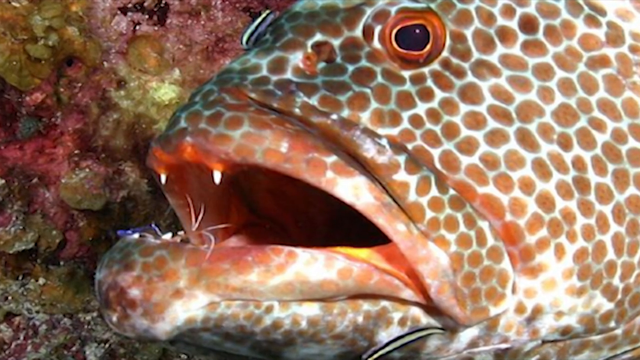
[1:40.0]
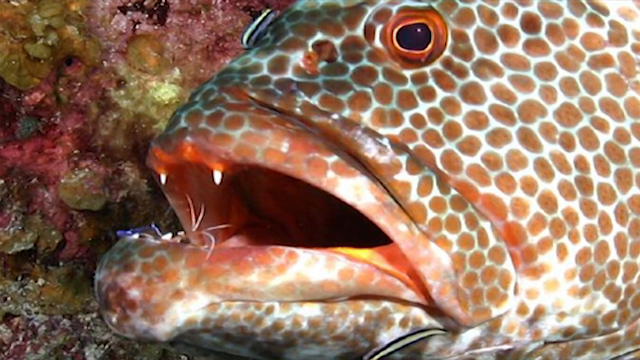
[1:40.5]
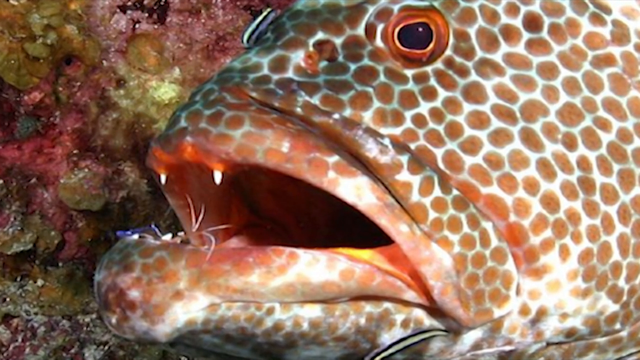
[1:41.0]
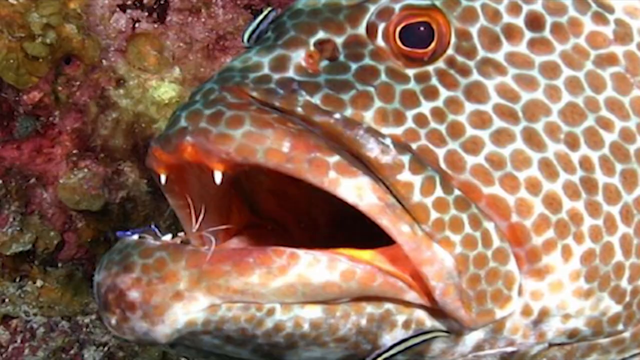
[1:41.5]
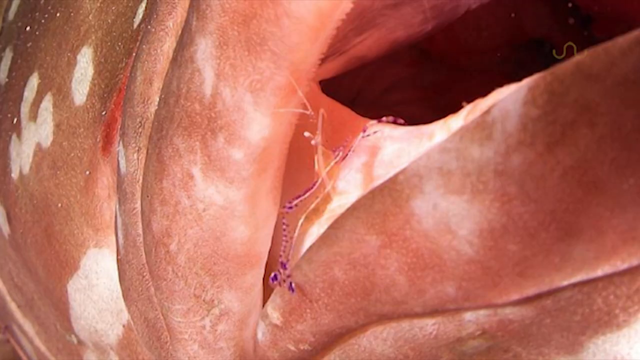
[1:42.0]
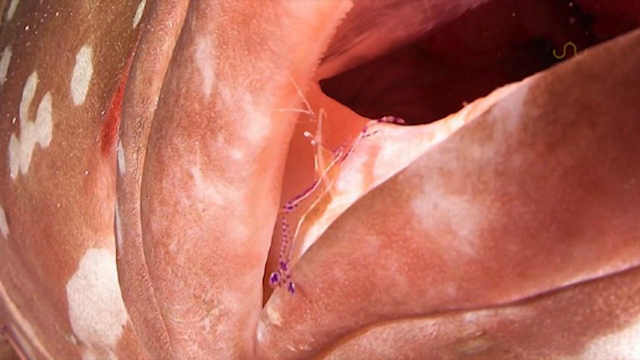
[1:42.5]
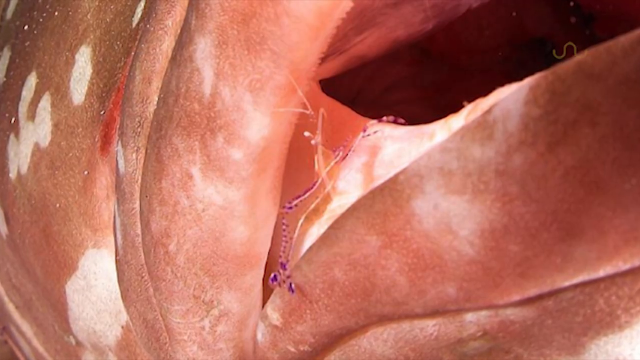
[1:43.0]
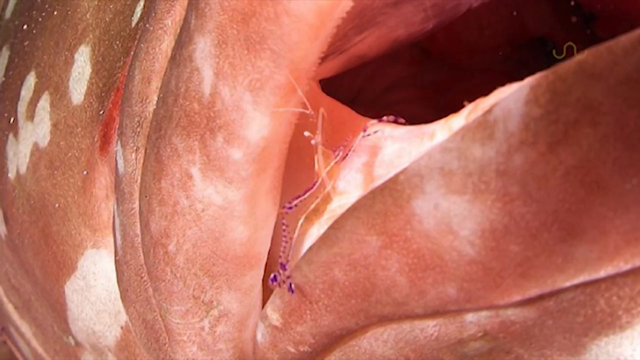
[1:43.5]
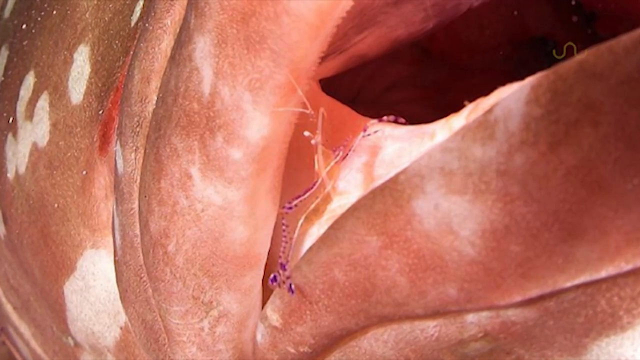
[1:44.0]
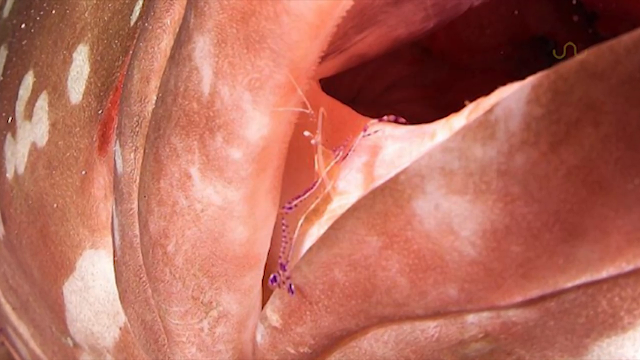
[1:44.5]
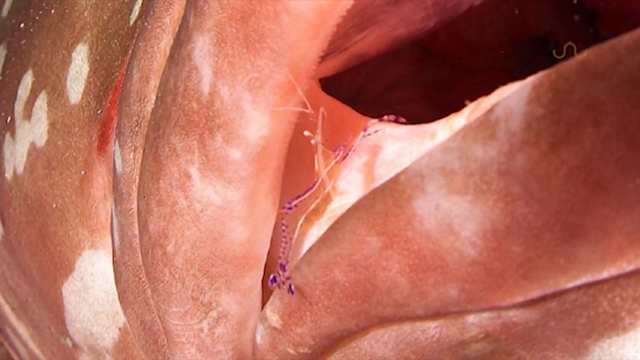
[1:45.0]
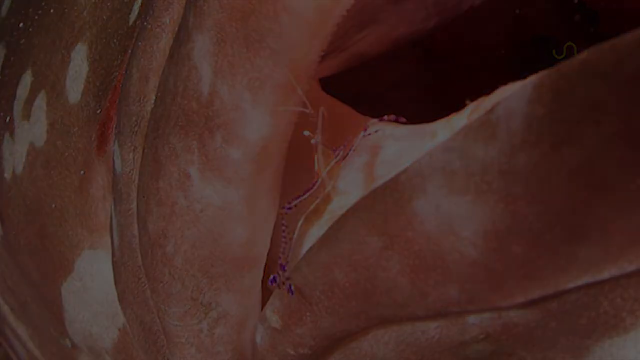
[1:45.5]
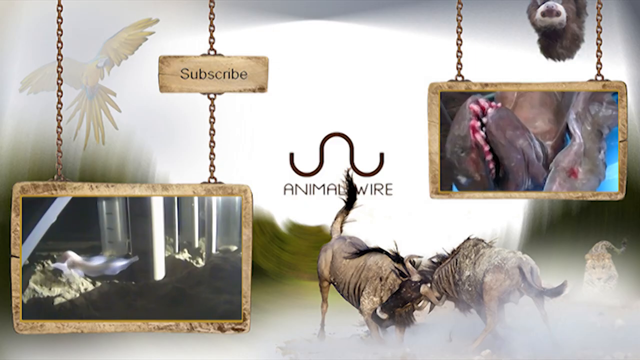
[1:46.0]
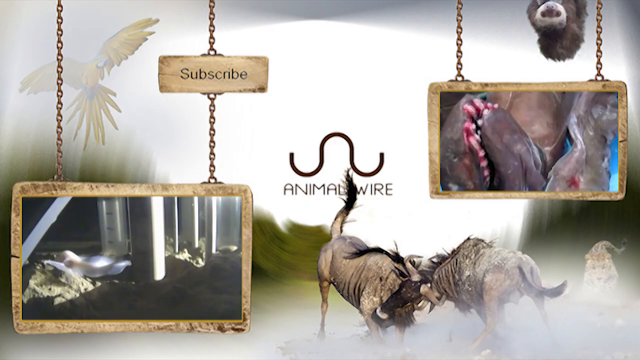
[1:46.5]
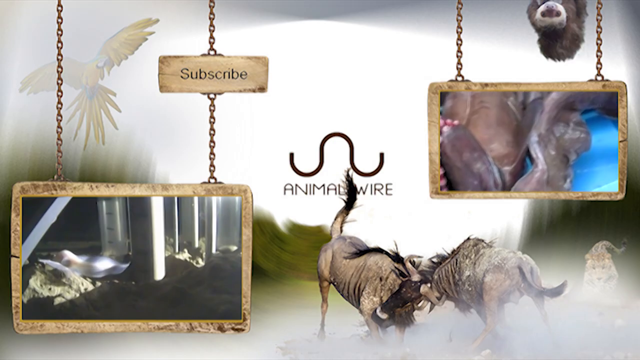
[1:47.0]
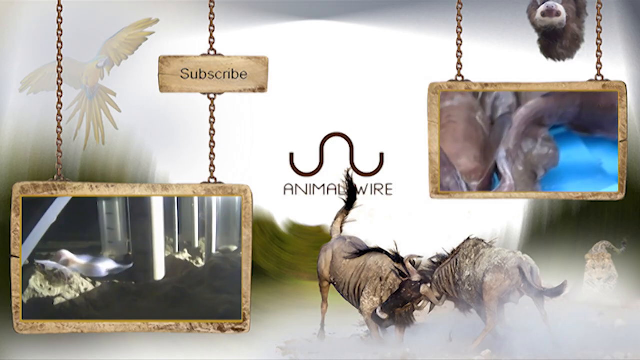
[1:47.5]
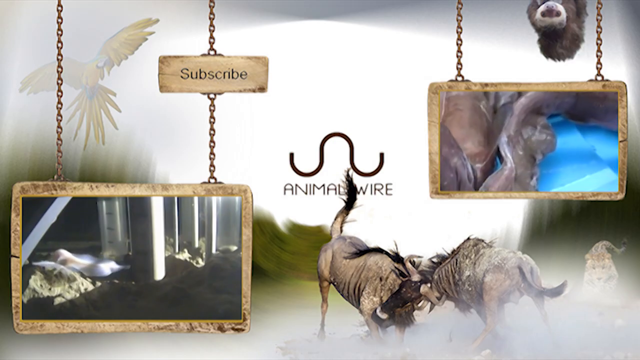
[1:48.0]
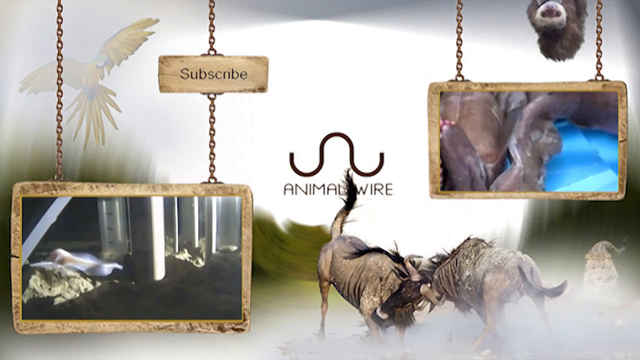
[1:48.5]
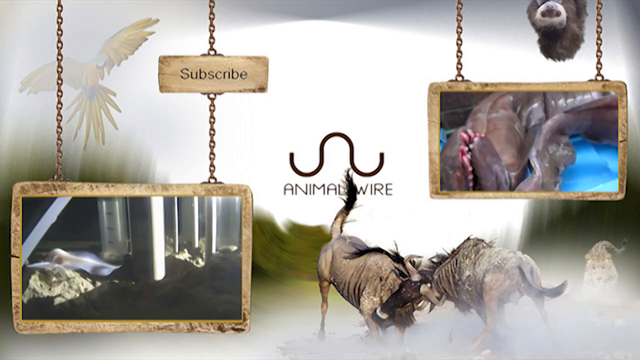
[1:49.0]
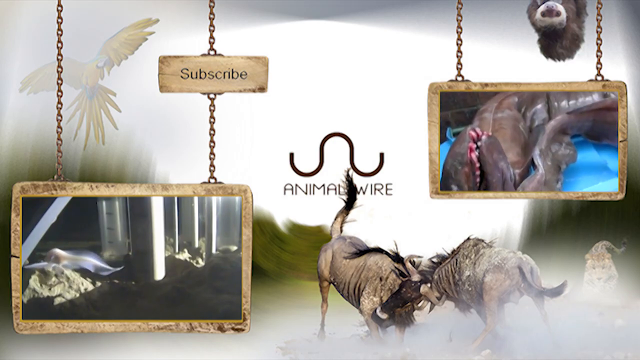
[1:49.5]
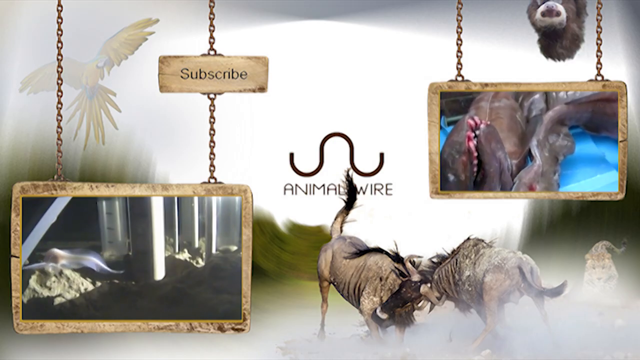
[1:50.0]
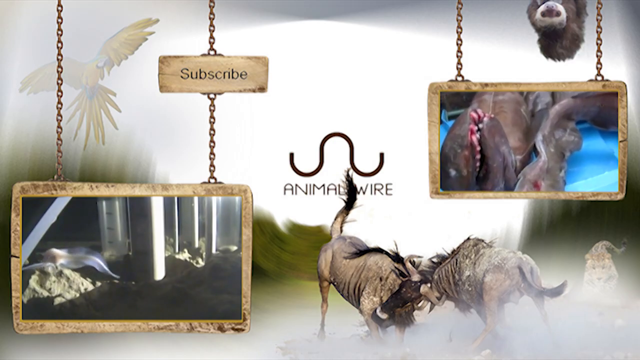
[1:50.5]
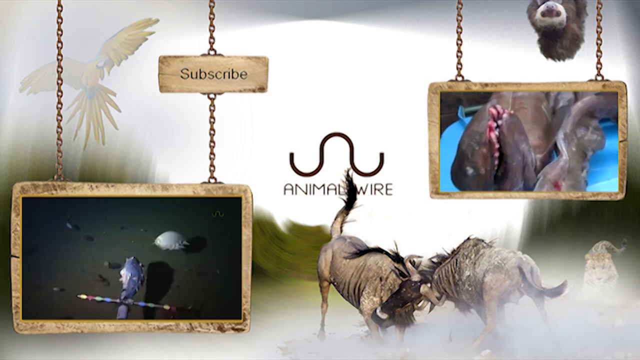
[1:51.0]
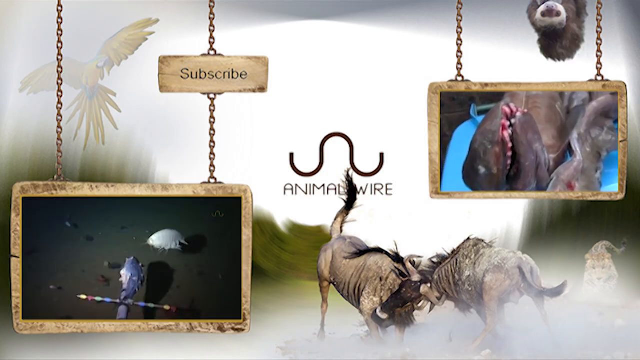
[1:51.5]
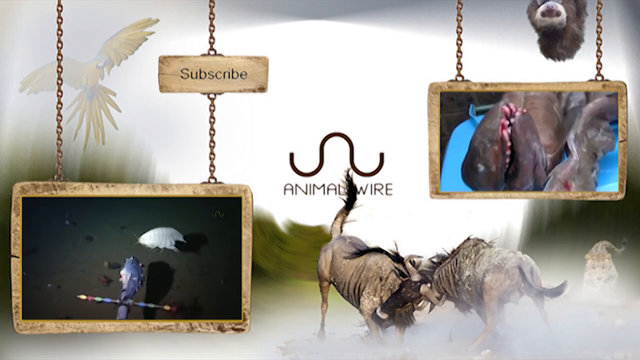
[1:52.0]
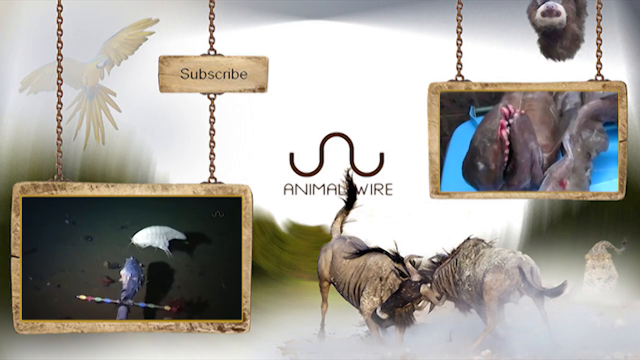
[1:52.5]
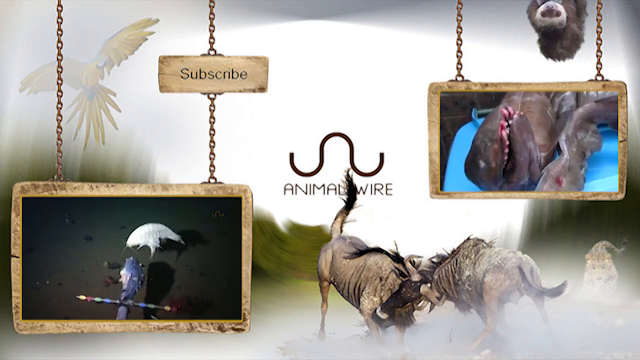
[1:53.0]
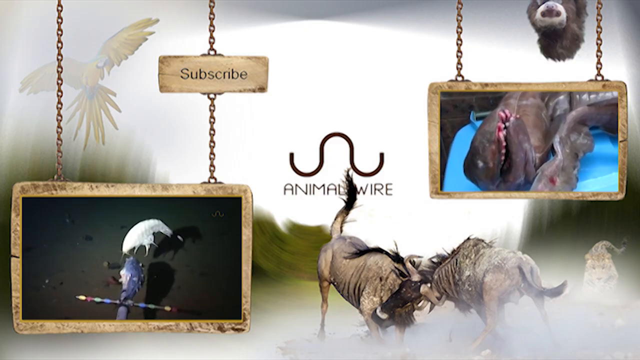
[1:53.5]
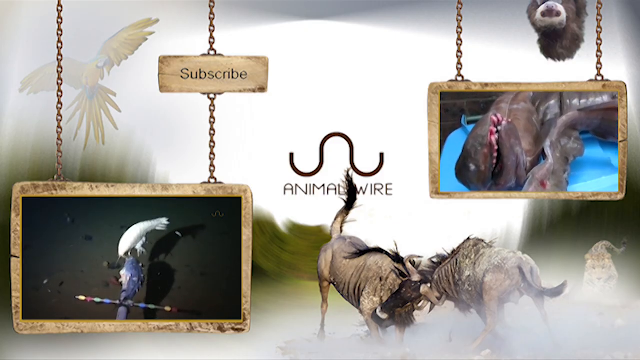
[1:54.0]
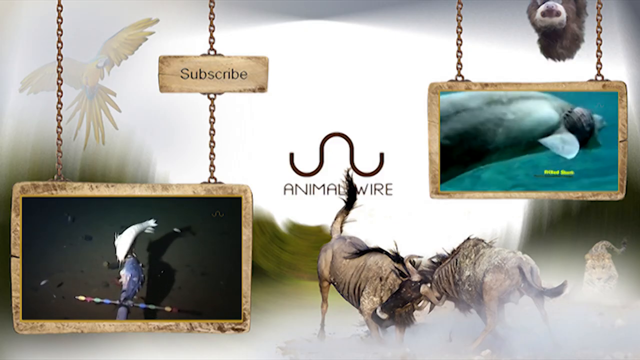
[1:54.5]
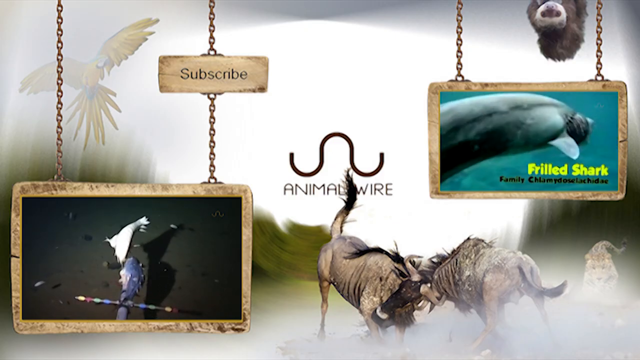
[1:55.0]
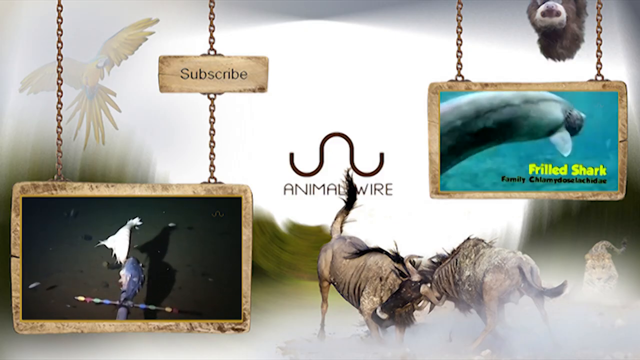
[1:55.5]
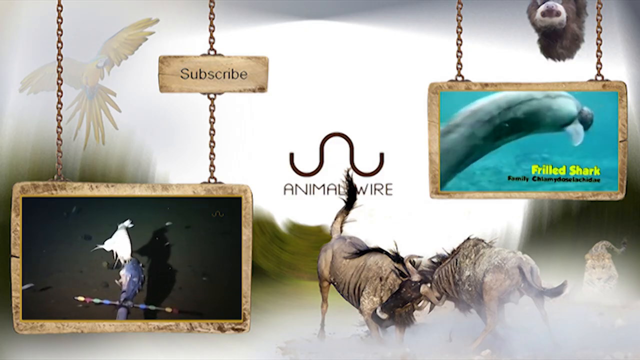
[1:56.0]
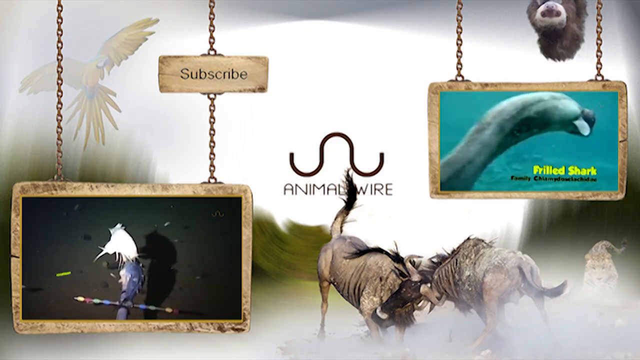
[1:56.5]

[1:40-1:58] The Pedersen's shrimp is inside the mouth of the big fish, which is really big and has lots of spots on it. A screen then says "subscribe animal wire". The view returns to the spotted fish in a close-up. The final screen shows animal wire and two boxes hanging on chains that show two videos of different underwater creatures: one might be a shark on a bright blue background, though it is hard to tell, and the other is an underwater scene with a fish moving close to some other fish. Various scenes of the creatures interacting with each other appear. An animal wire logo is shown with two other creatures fighting each other in the foreground; they seem to be creatures with lots of hair.